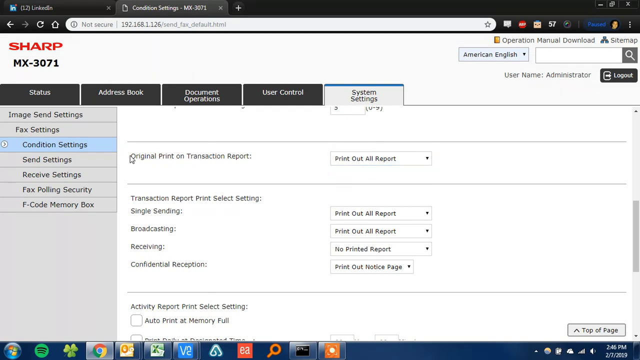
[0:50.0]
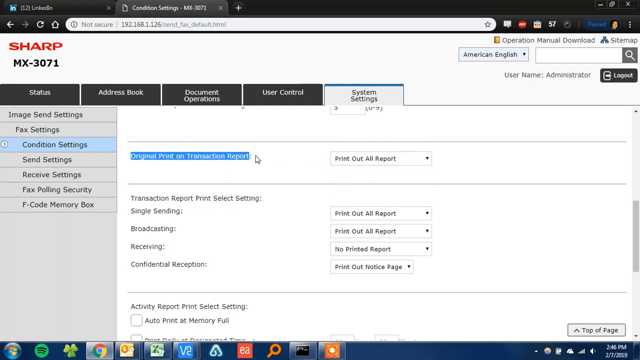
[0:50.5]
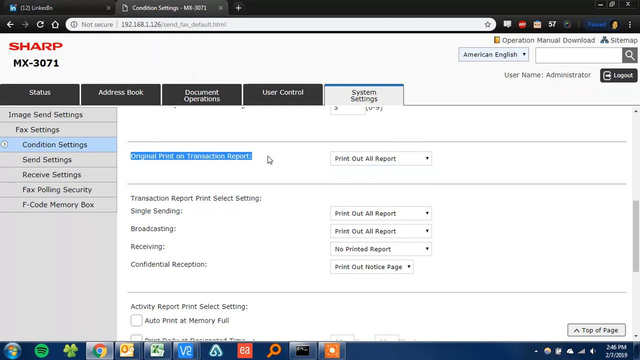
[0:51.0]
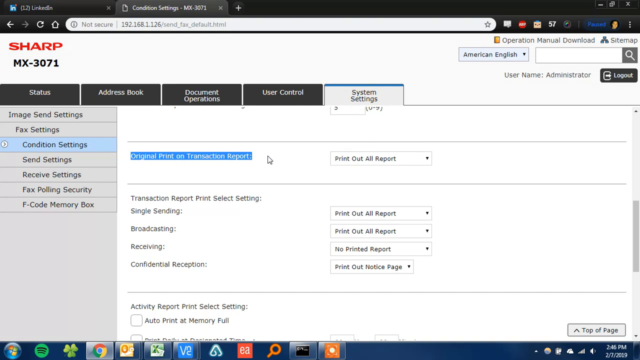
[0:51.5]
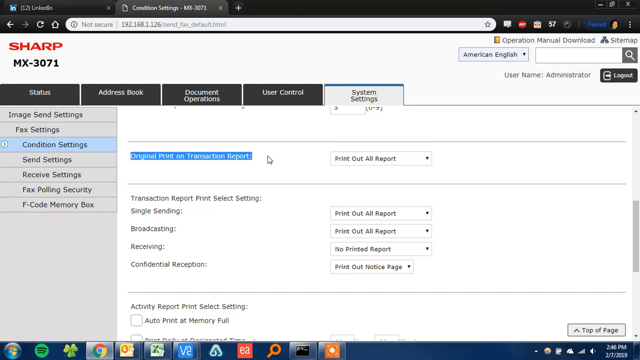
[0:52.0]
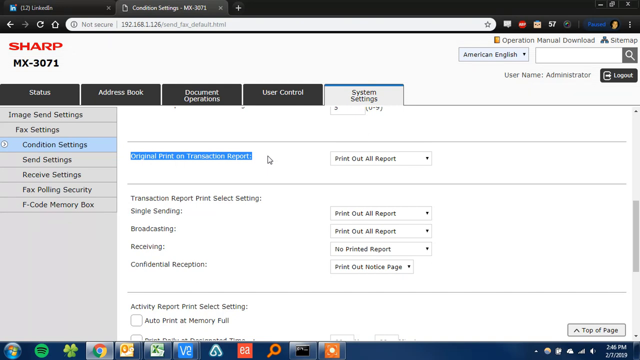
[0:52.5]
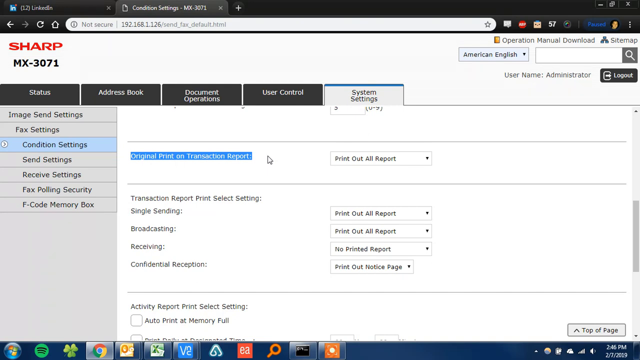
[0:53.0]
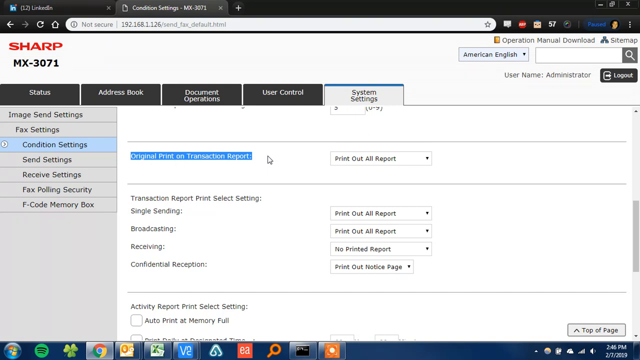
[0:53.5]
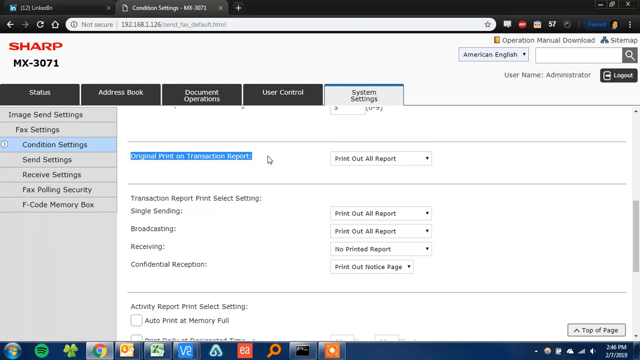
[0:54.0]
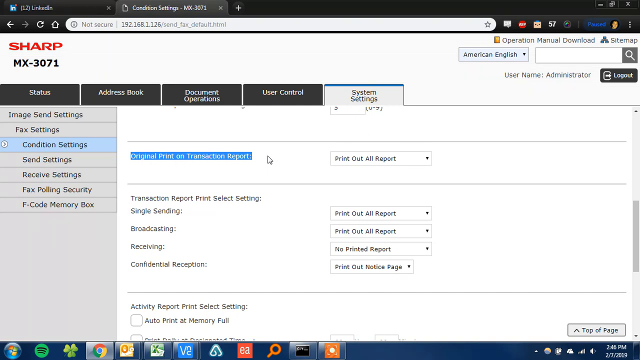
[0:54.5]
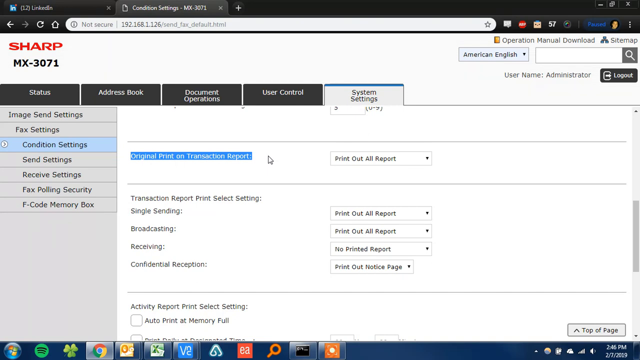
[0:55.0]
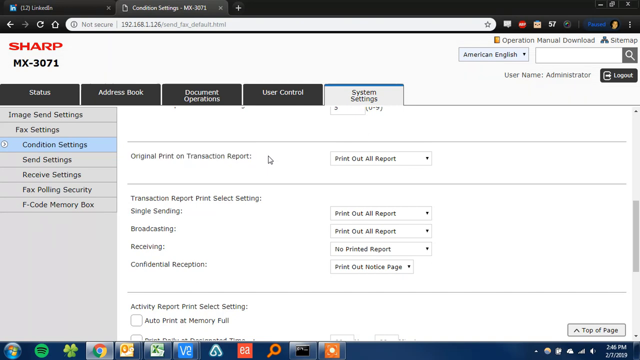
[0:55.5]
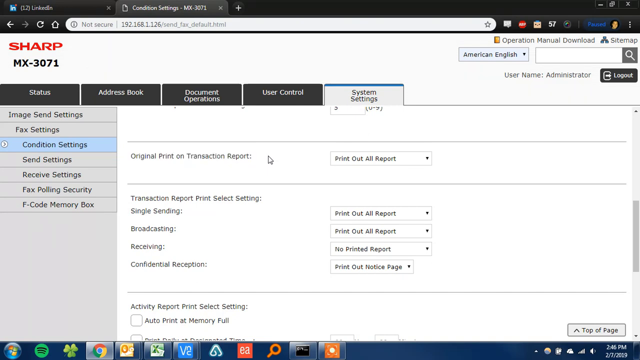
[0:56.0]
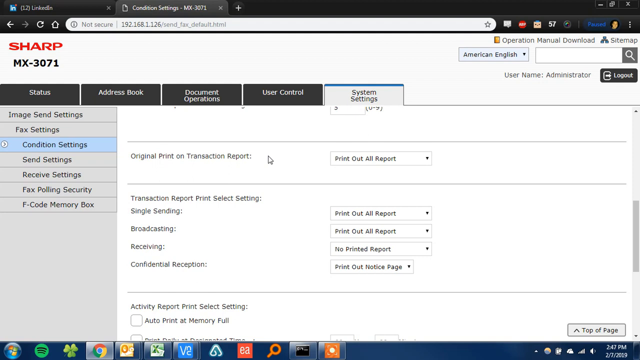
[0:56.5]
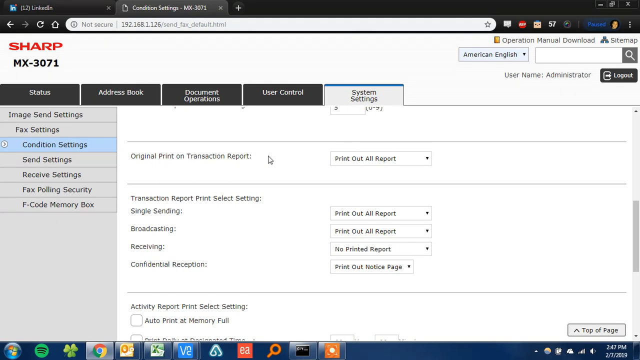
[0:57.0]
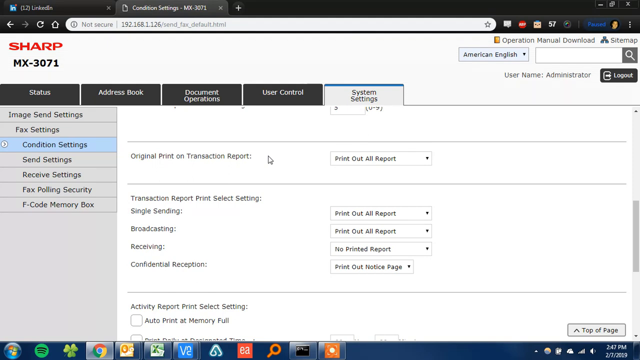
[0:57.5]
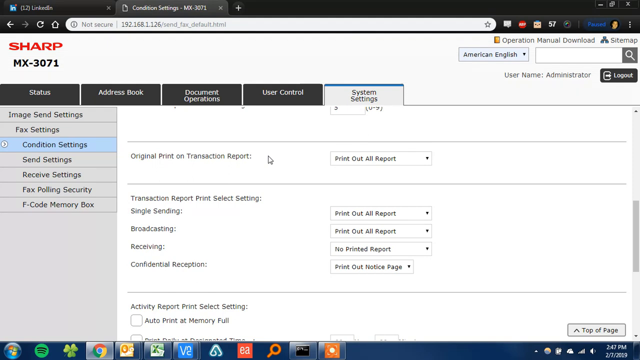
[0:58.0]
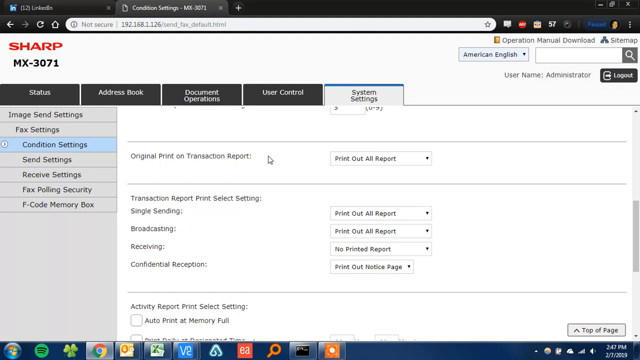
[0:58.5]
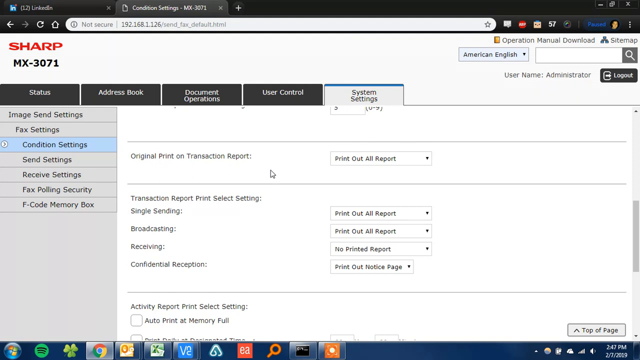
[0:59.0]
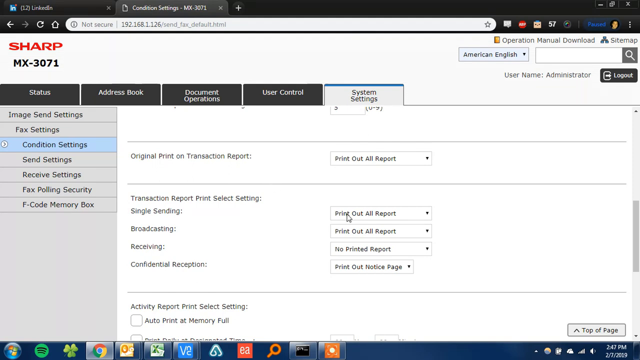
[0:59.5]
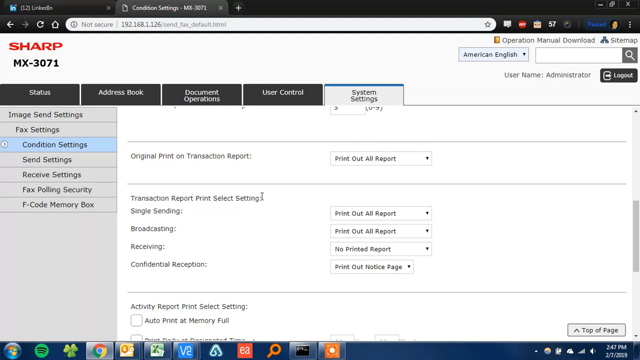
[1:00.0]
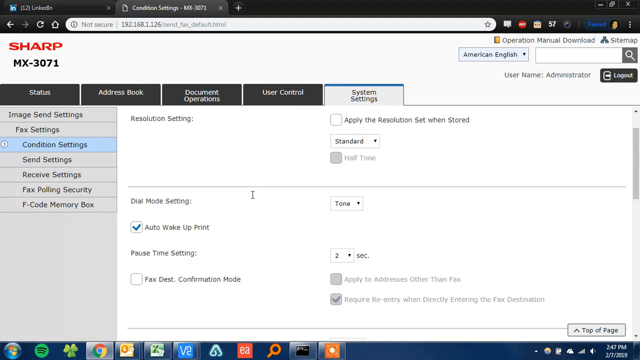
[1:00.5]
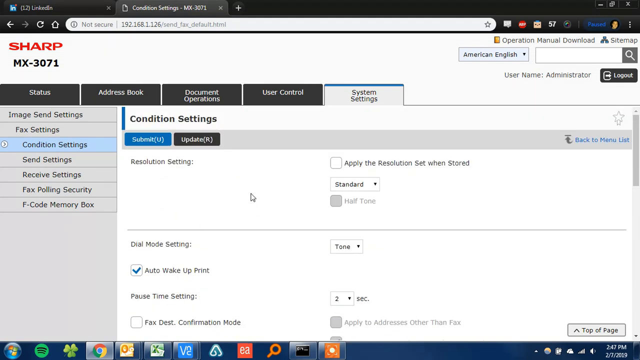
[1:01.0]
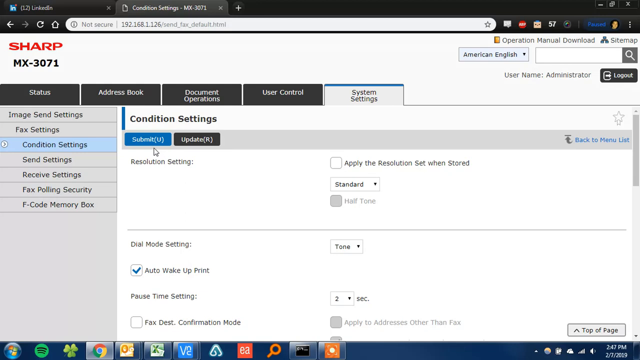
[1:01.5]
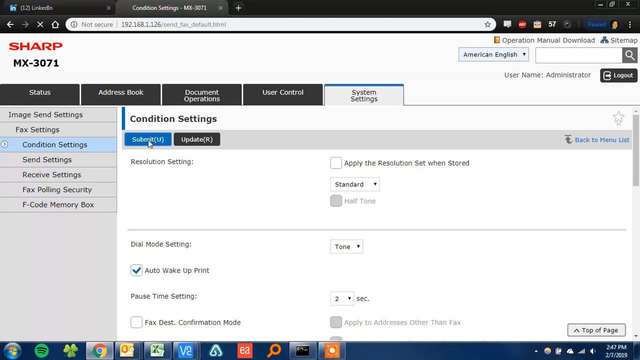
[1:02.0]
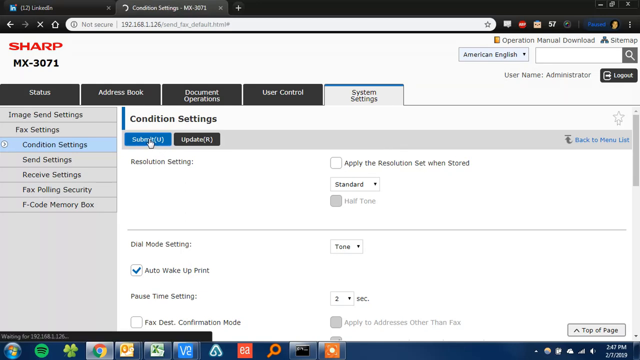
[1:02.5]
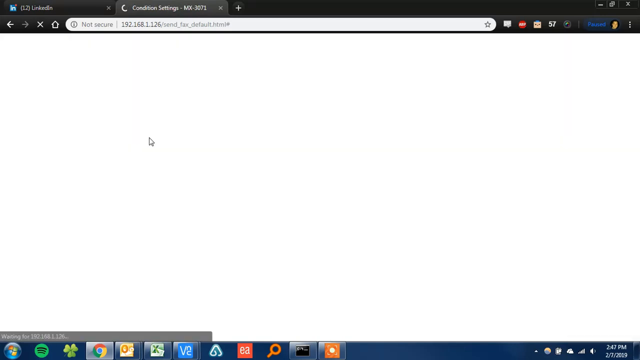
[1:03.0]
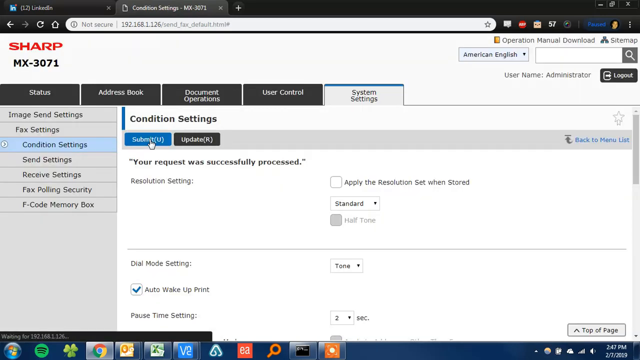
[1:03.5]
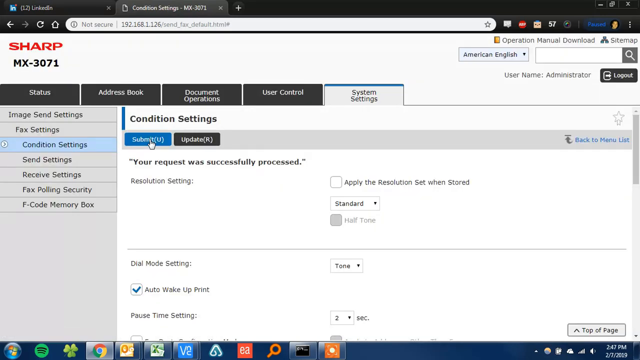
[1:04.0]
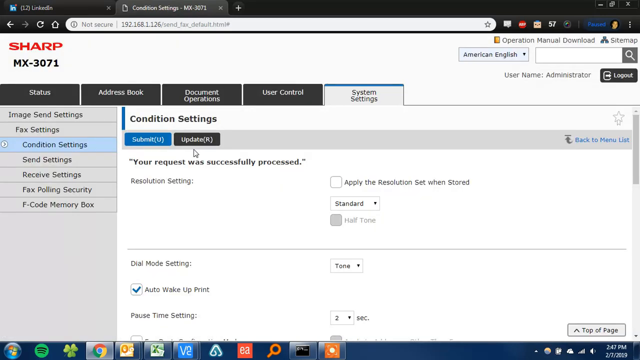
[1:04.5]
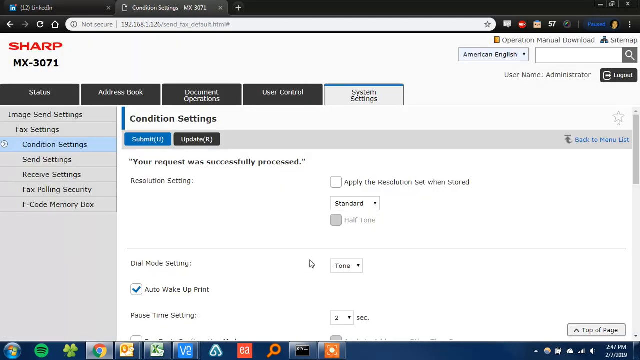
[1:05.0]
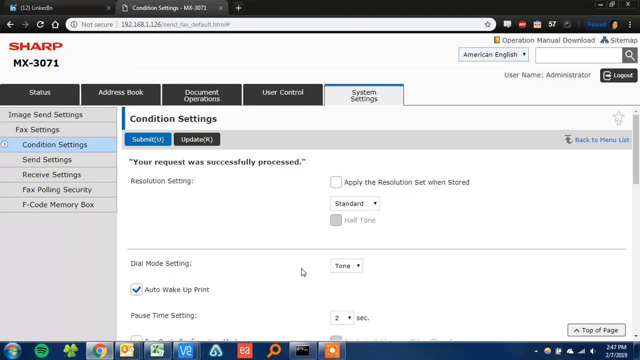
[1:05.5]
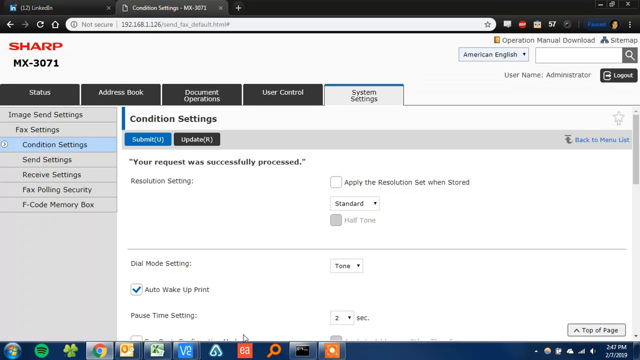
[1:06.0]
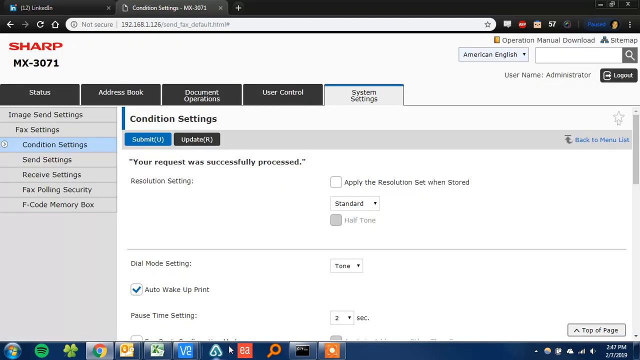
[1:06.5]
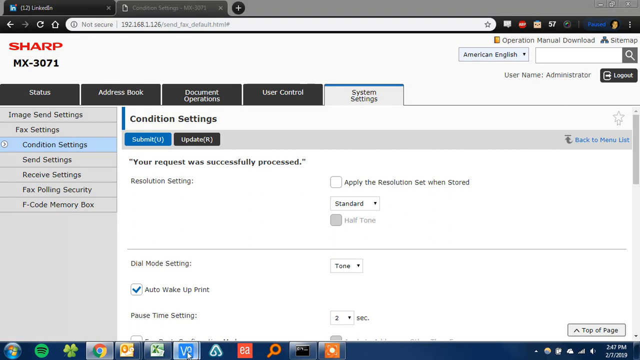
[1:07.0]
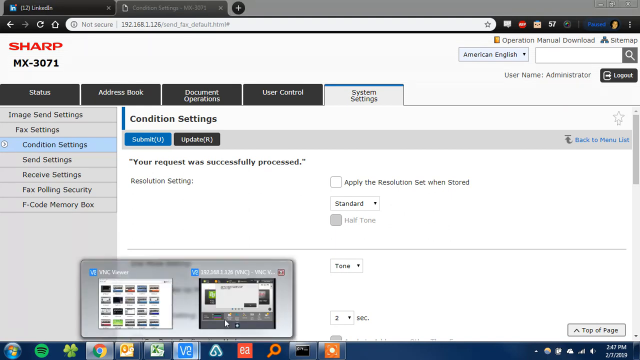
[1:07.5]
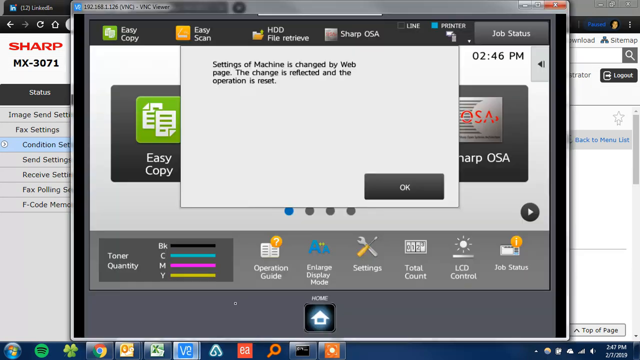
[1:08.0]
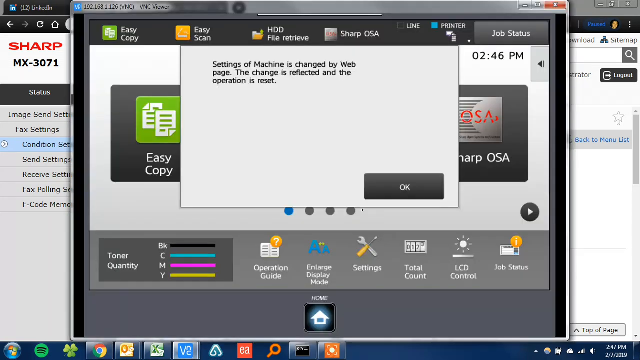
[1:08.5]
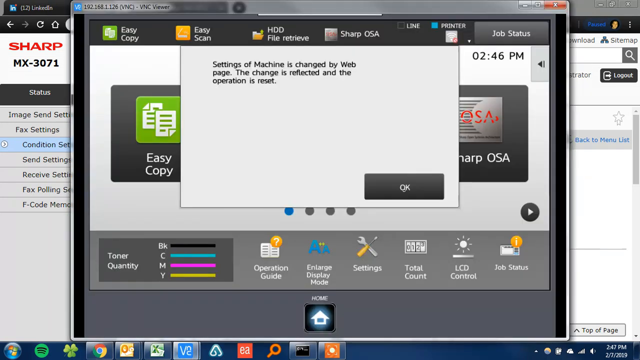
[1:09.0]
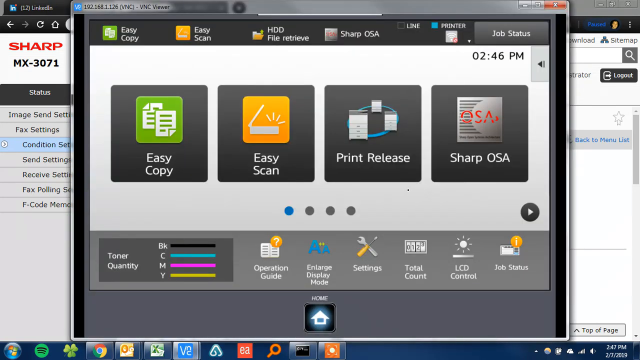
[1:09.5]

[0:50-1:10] In the system settings, original print on transaction report is highlighted and then becomes unhighlighted. The user goes back up to the top, where there are two buttons, a blue submit and a black update, and they hit submit. A pop-up appears reading "settings of the machine is changed by web page. The change is reflected and the operation is reset", and they close it. Another pop-up is open that seems to relate to a printer and shows toner quality: a black line for black, a C with a turquoise line, an M with a pink line and a Y with a yellow line. It also has options for operation guide, enlarged display mode, settings, total count, LCD control and job status, and shows the time as 2:46 p.m.